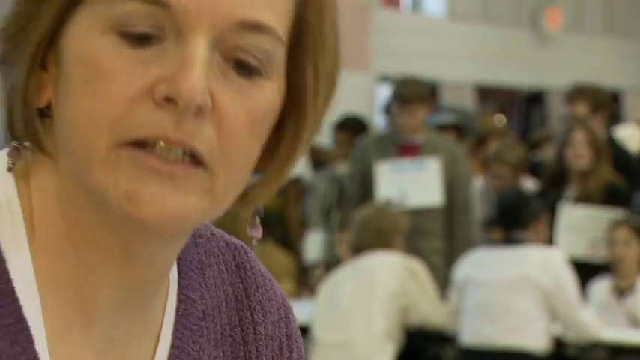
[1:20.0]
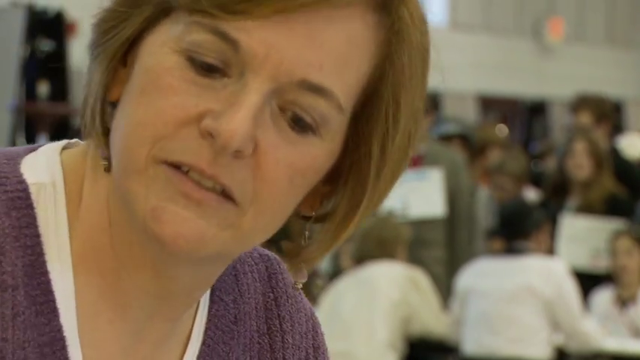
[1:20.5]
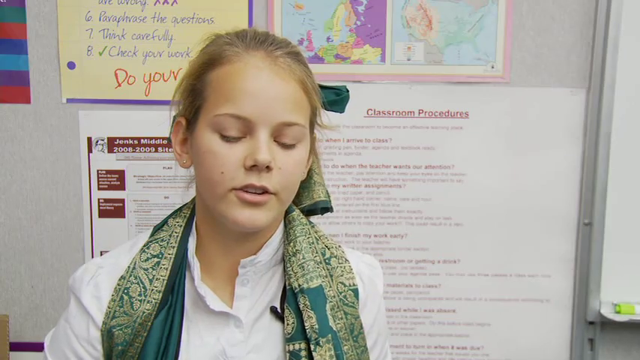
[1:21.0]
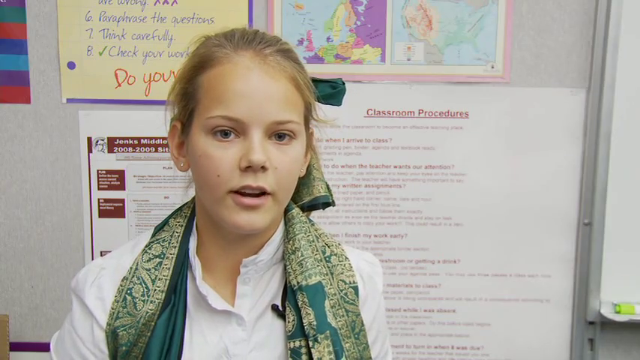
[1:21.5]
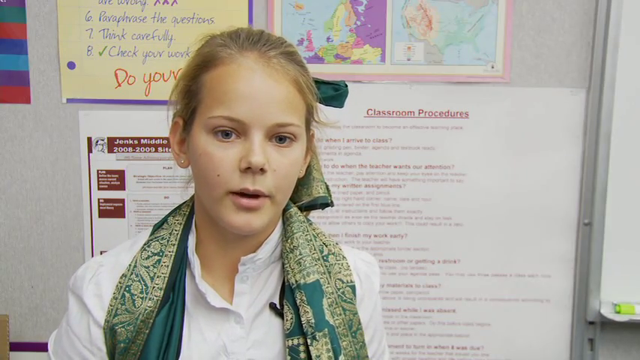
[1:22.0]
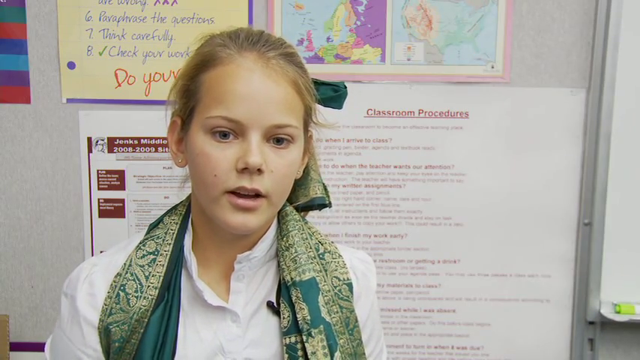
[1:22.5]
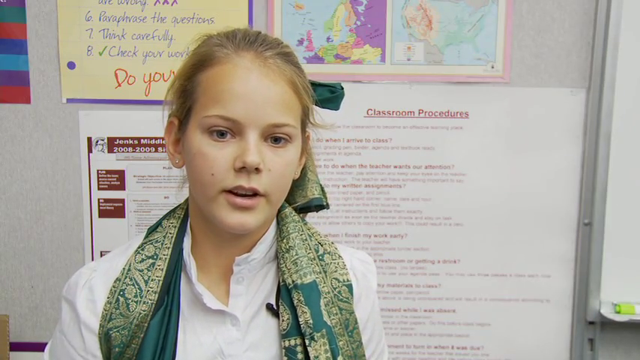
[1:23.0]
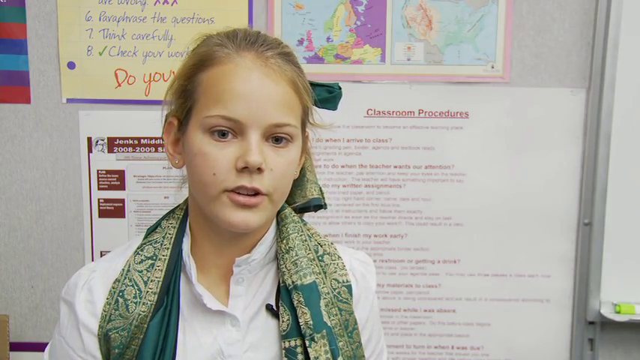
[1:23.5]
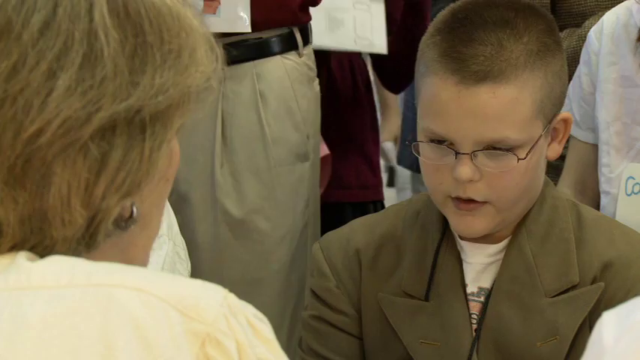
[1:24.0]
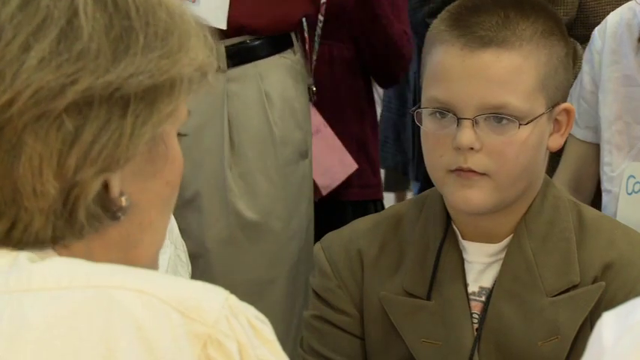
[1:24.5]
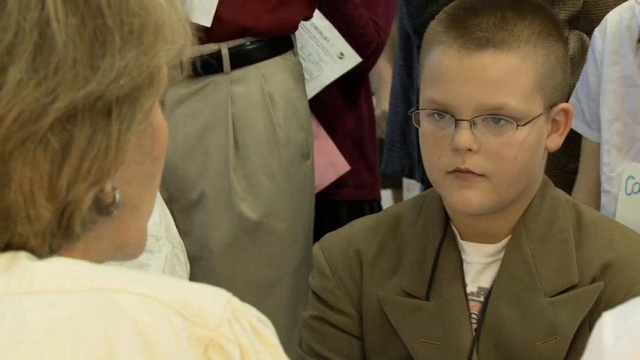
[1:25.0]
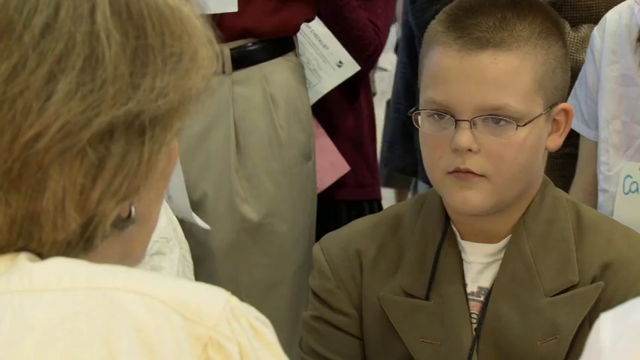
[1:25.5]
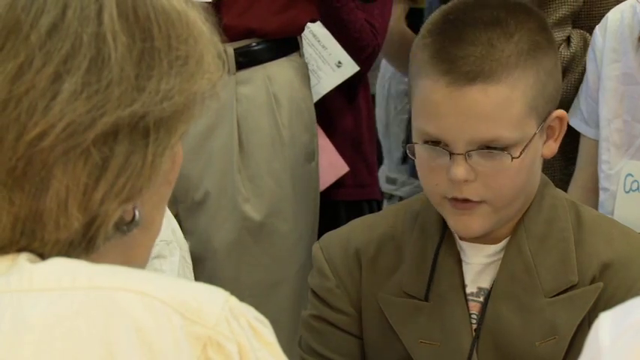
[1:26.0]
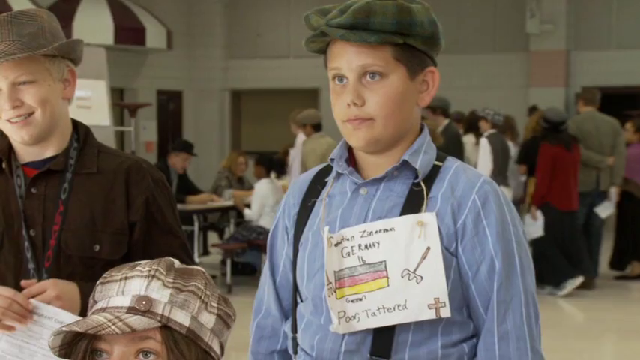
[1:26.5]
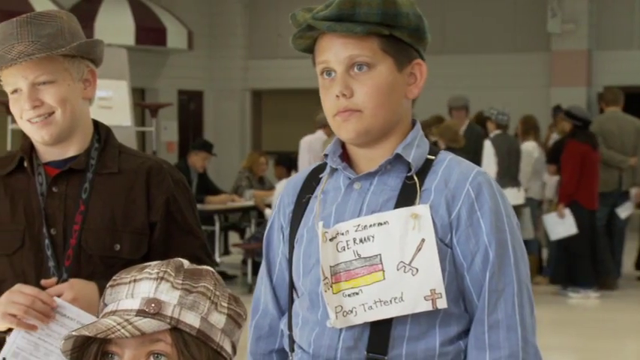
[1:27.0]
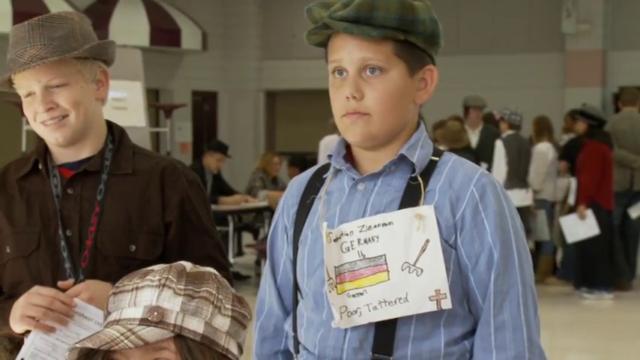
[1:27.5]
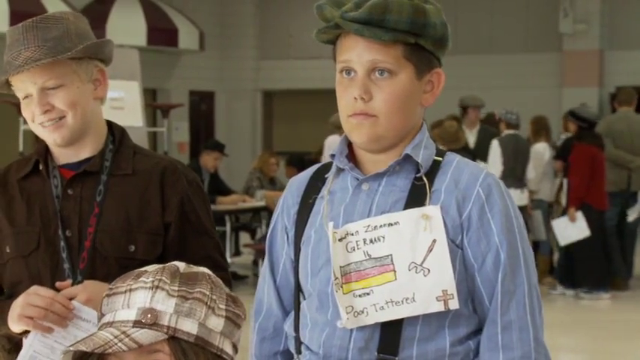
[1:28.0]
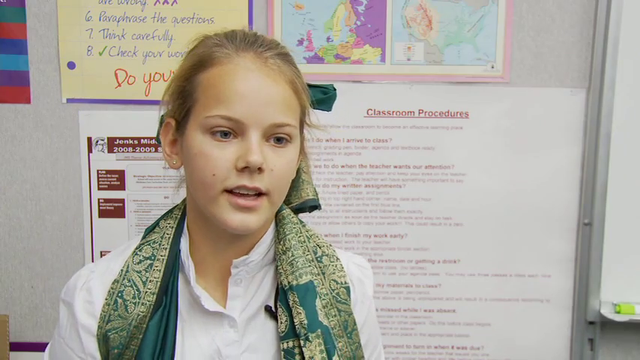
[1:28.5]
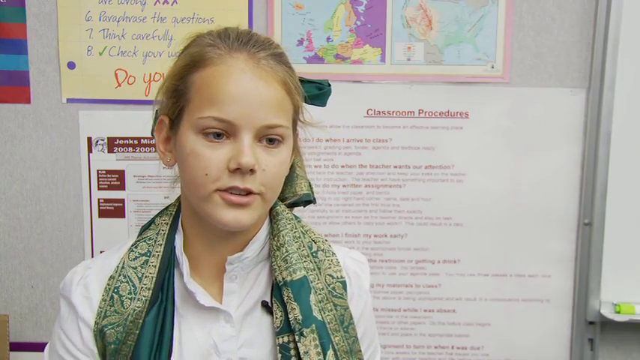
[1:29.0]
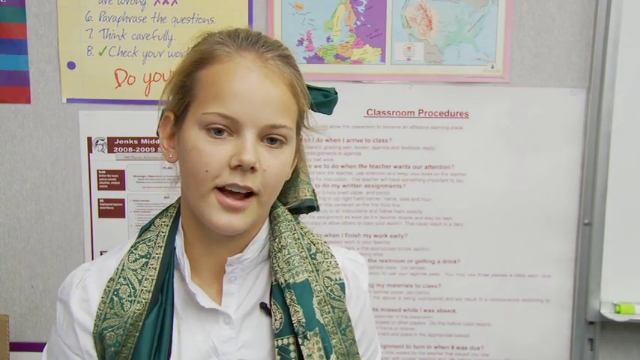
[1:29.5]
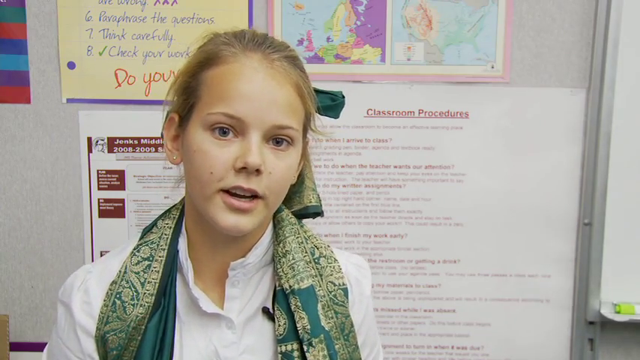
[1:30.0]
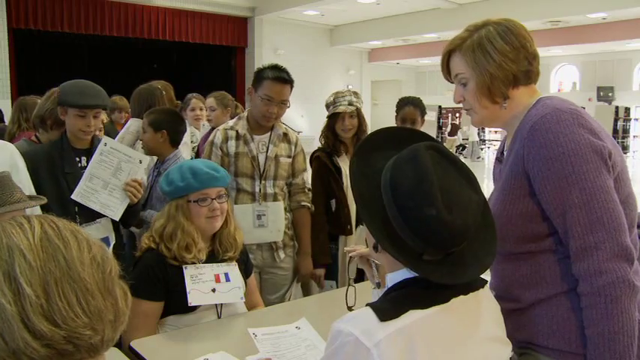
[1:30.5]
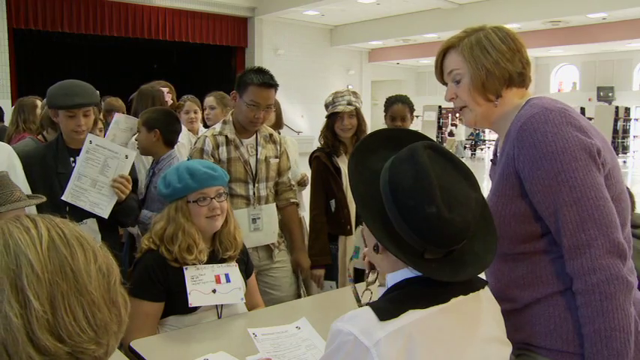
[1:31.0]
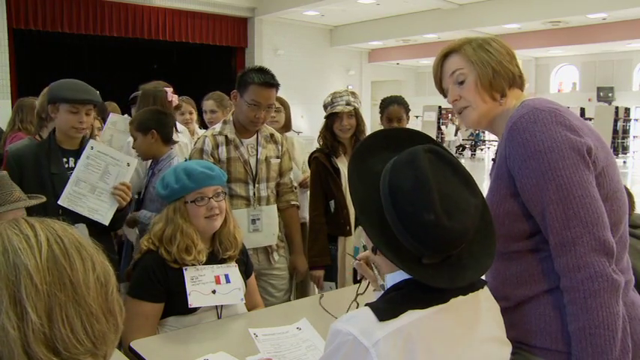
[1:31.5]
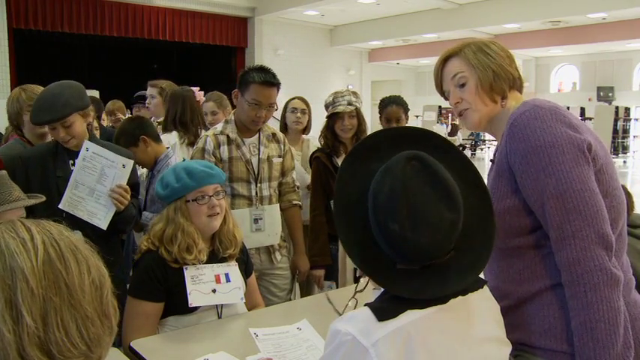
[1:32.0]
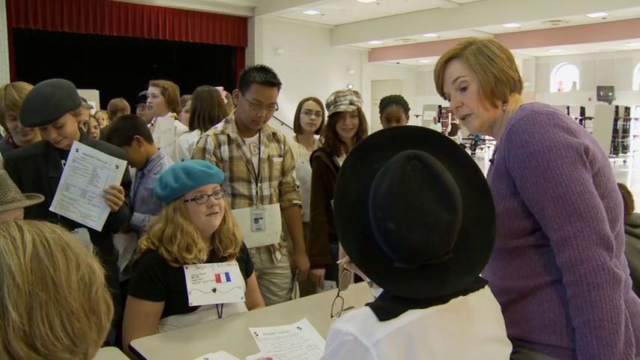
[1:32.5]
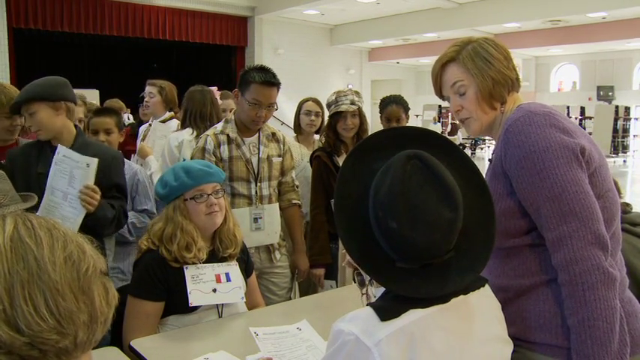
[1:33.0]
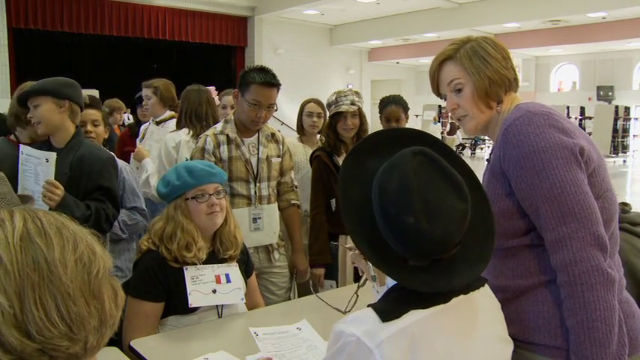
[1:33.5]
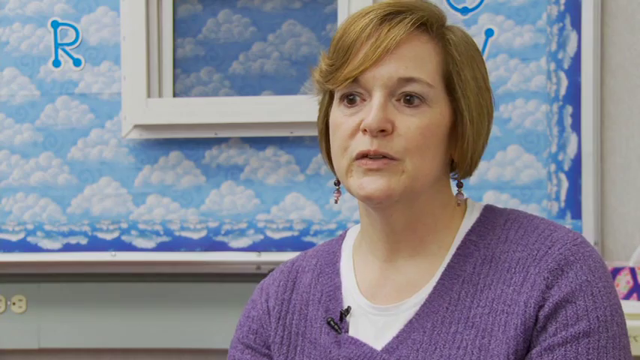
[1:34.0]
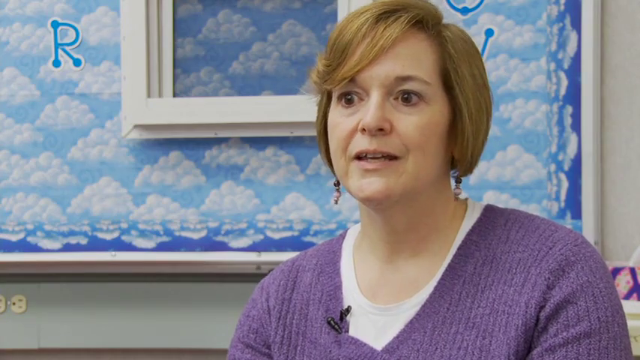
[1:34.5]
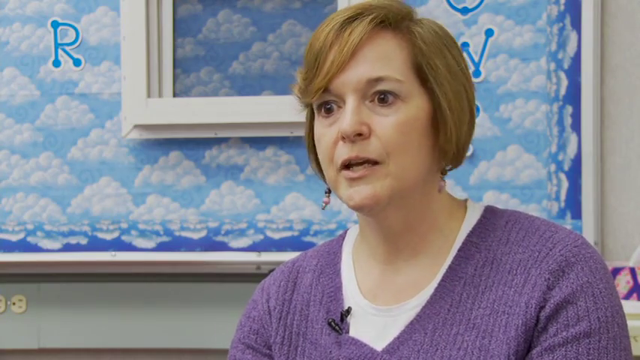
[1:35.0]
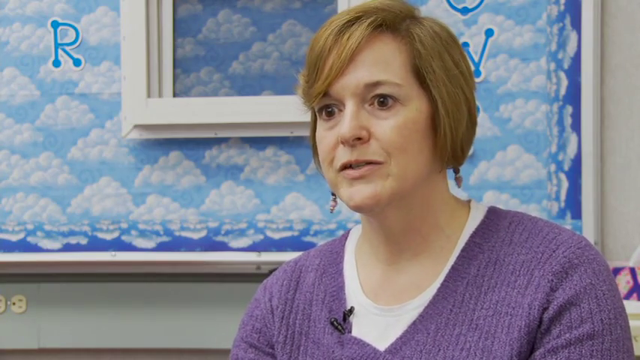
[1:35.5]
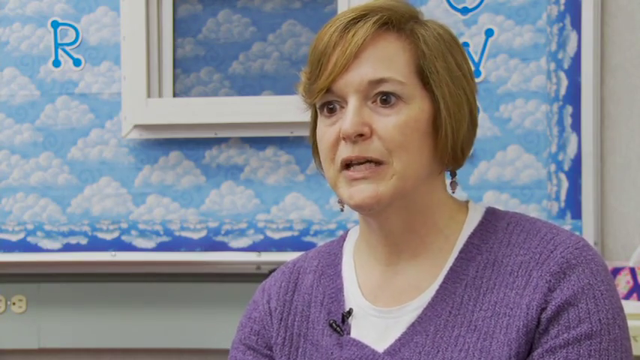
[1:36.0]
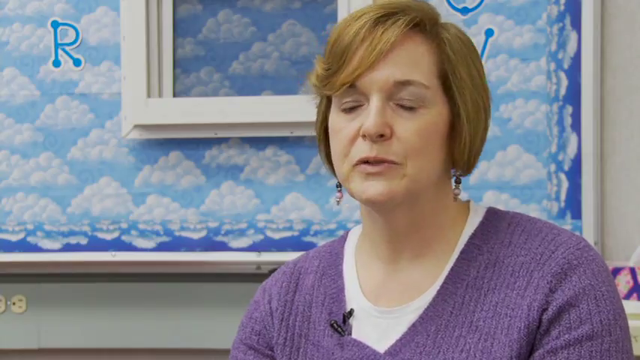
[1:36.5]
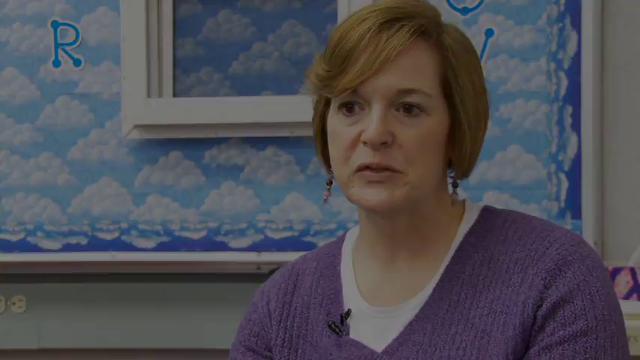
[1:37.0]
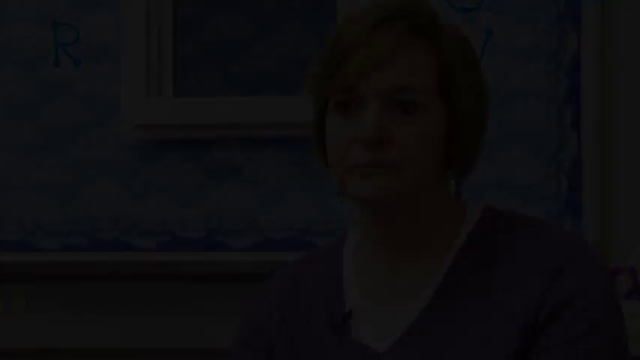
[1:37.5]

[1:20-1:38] A young girl wears a blue shawl or bandana. One kid has a Germany flag, and a girl has one from France. The event looks like a mock immigration, apparently simulating Ellis Island. The girl being interviewed has blonde hair, appears to be adolescent, and wears a blue shawl or scarf.